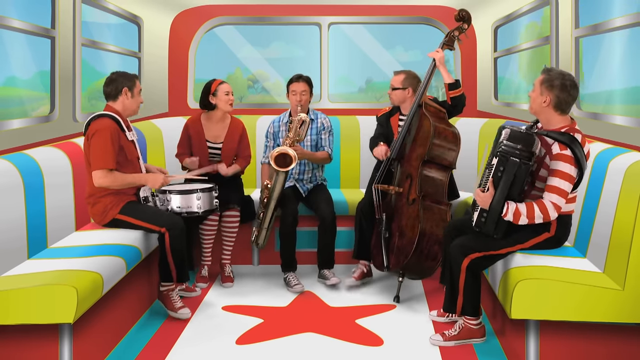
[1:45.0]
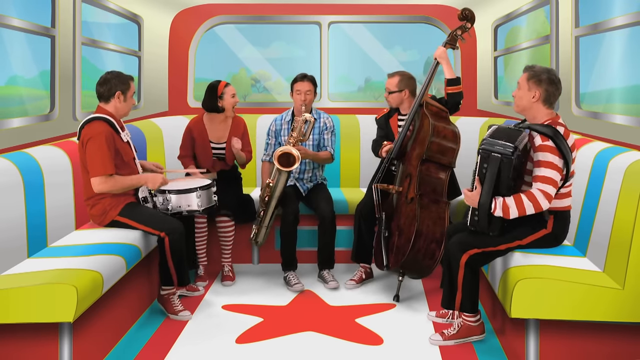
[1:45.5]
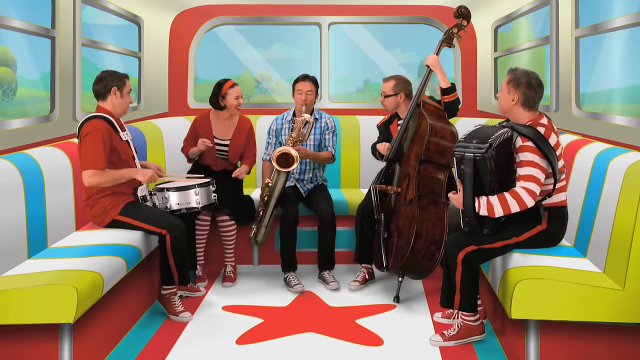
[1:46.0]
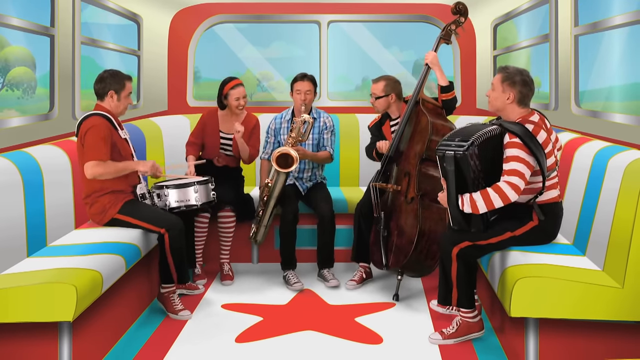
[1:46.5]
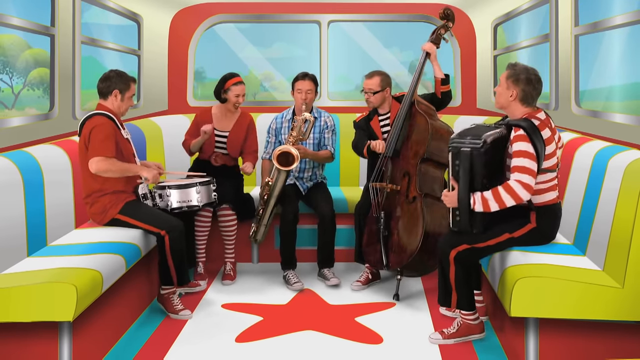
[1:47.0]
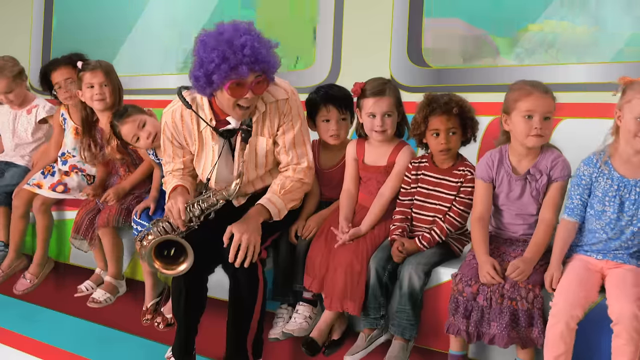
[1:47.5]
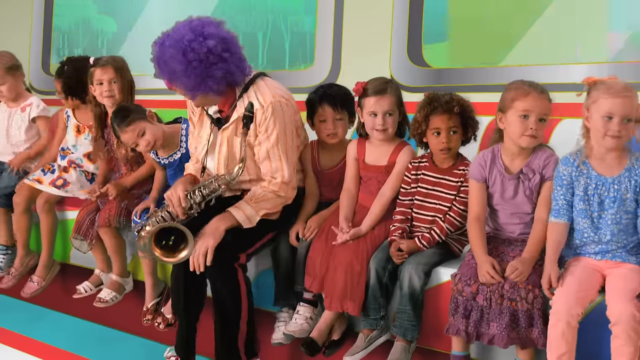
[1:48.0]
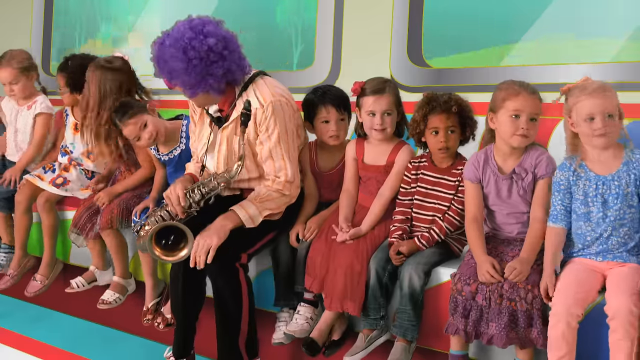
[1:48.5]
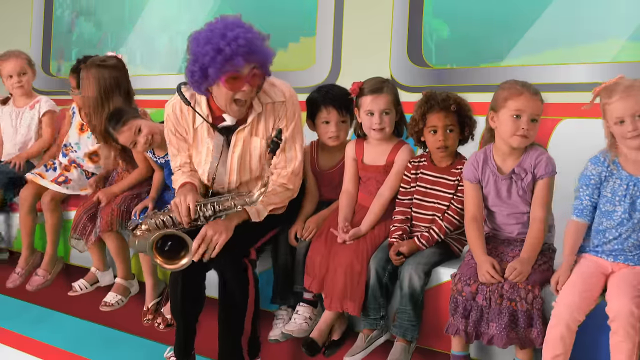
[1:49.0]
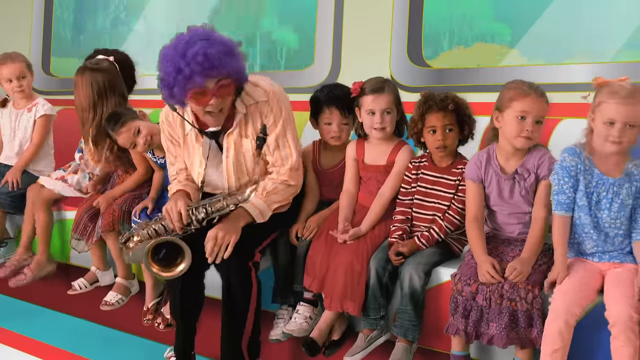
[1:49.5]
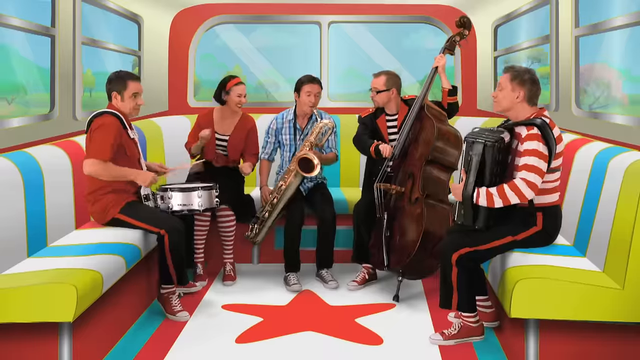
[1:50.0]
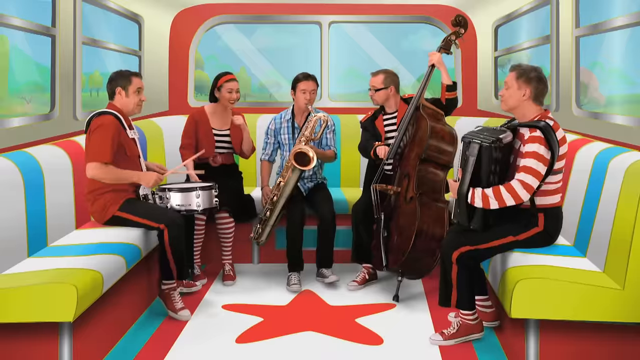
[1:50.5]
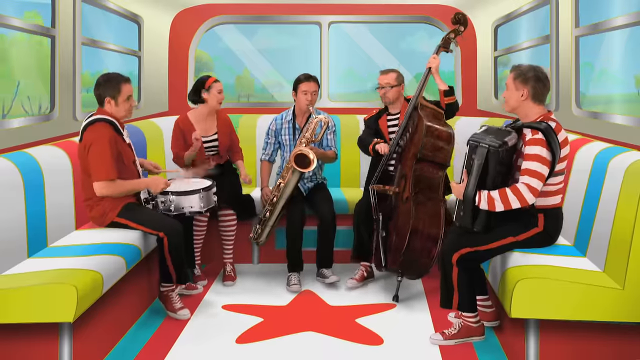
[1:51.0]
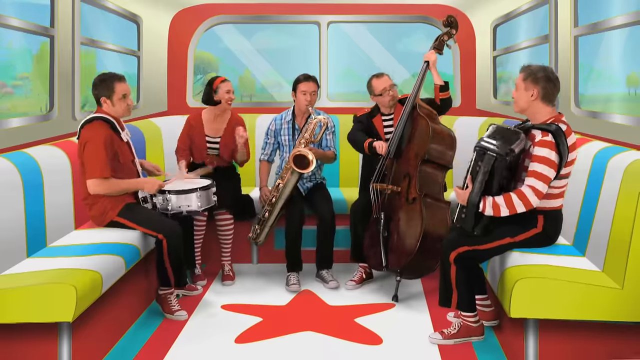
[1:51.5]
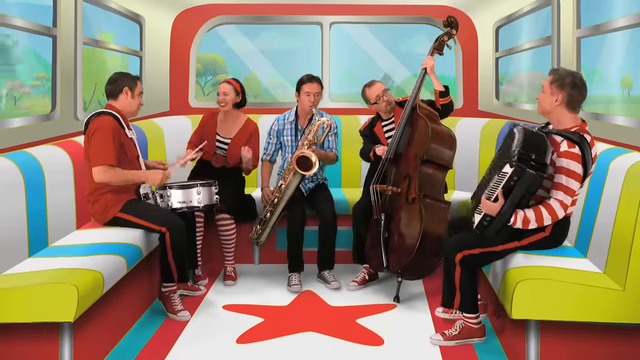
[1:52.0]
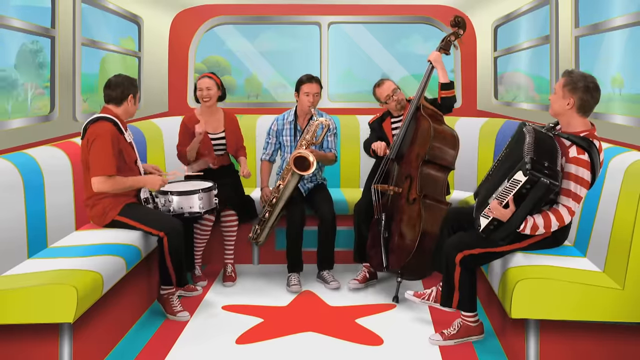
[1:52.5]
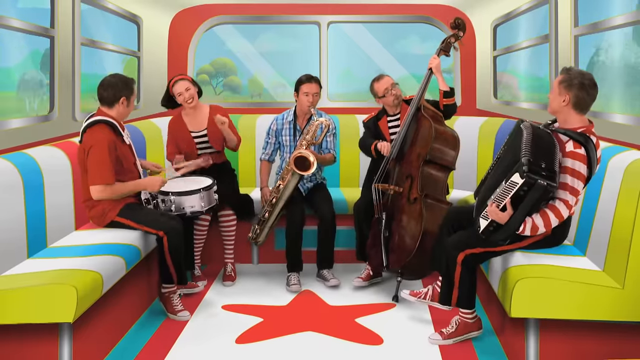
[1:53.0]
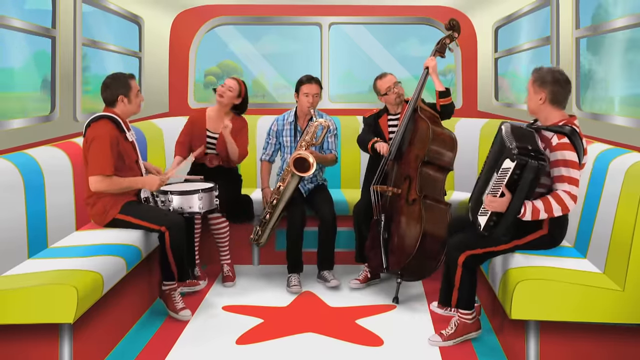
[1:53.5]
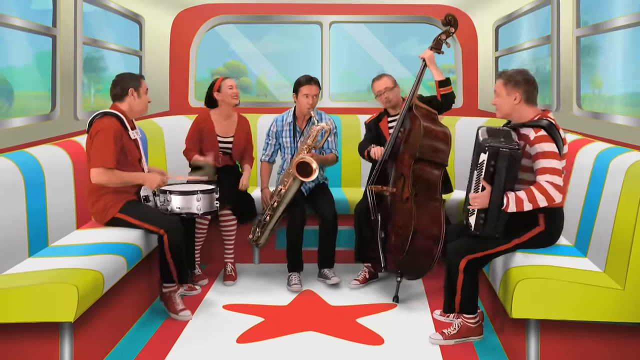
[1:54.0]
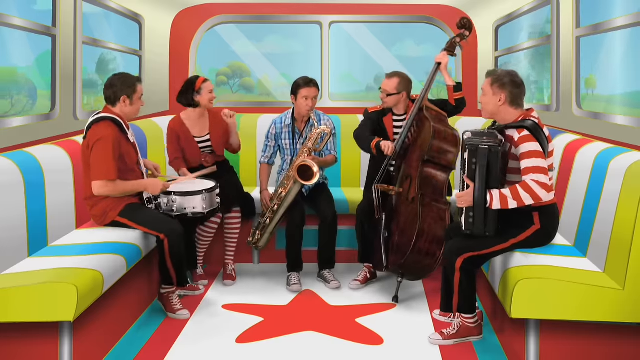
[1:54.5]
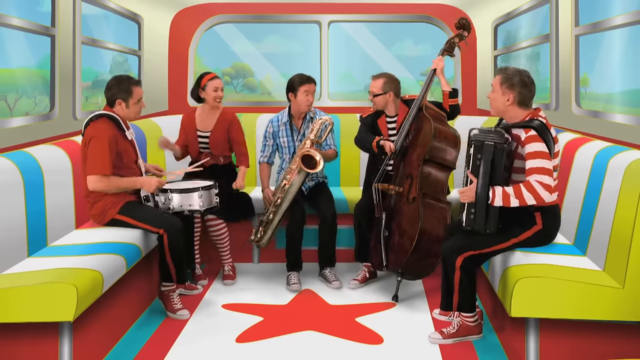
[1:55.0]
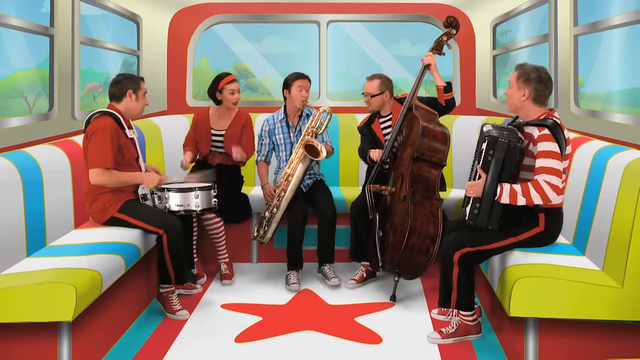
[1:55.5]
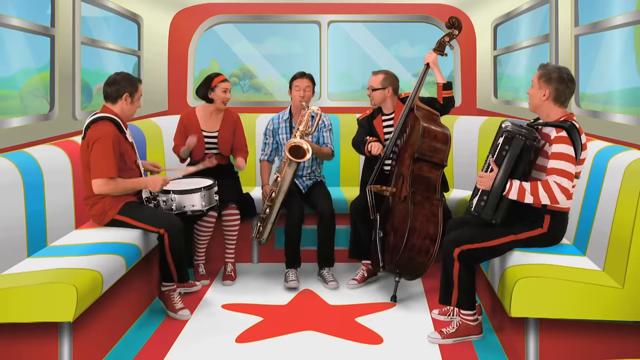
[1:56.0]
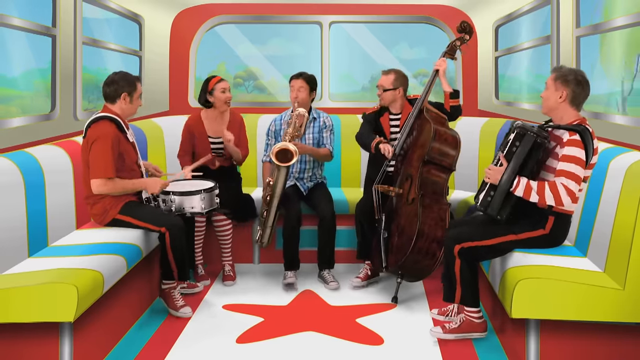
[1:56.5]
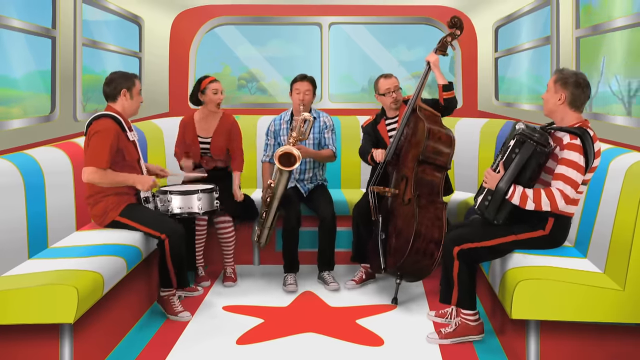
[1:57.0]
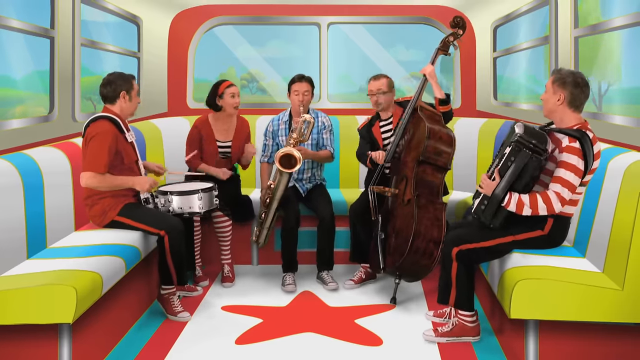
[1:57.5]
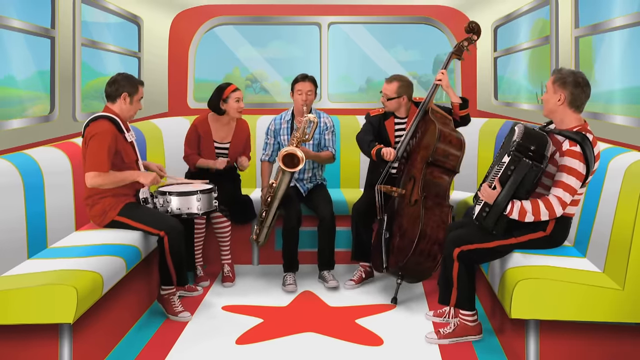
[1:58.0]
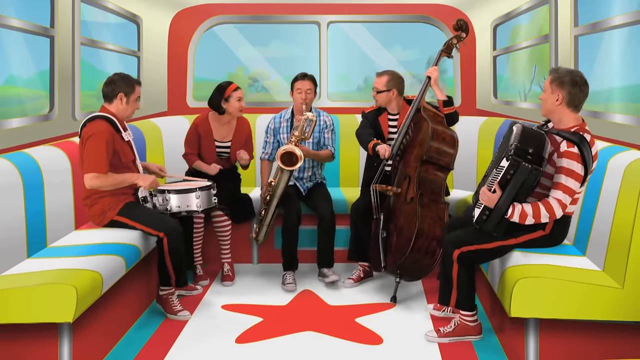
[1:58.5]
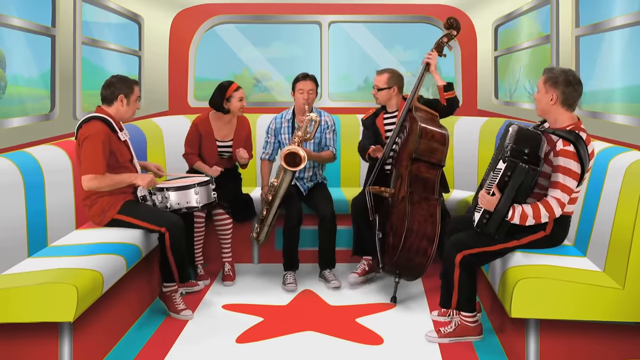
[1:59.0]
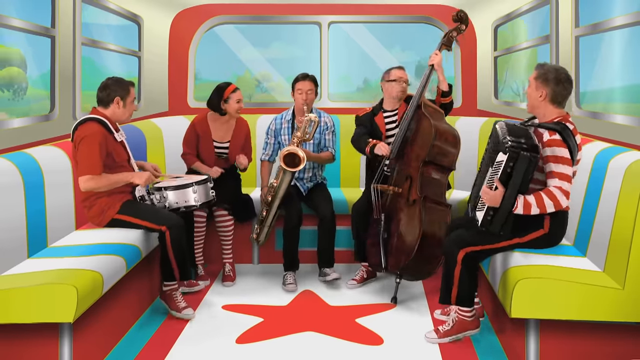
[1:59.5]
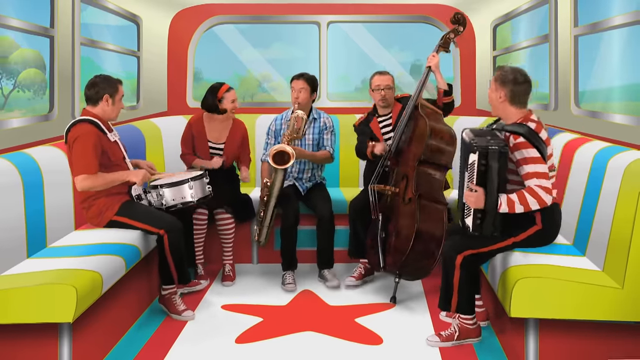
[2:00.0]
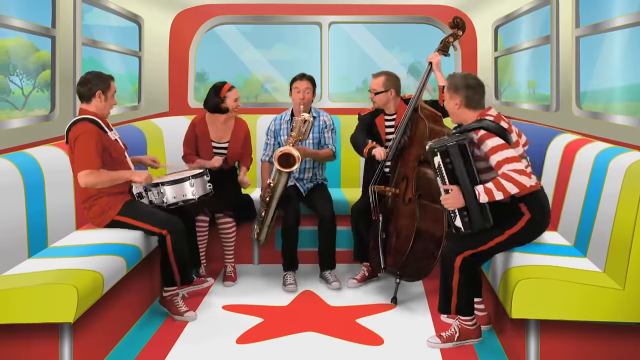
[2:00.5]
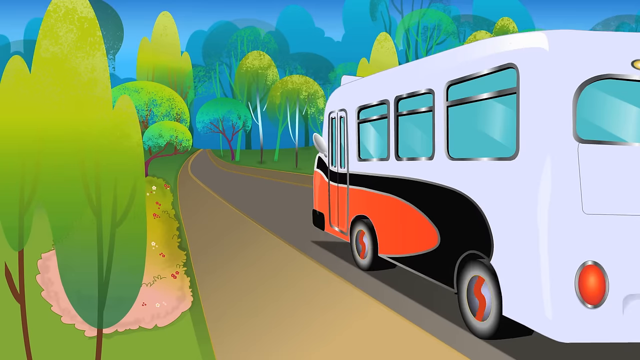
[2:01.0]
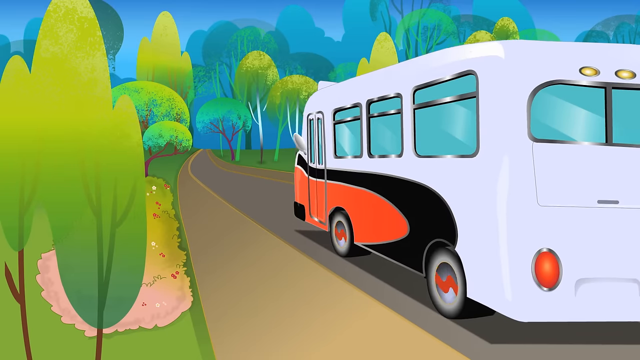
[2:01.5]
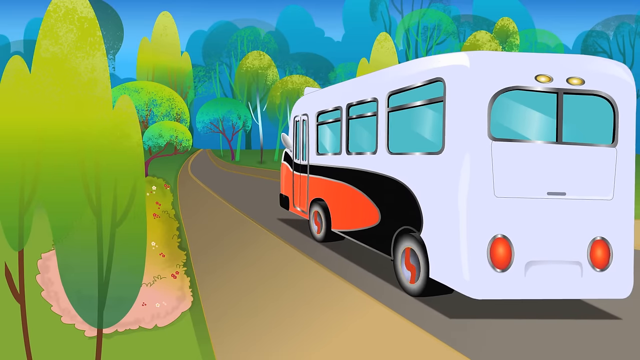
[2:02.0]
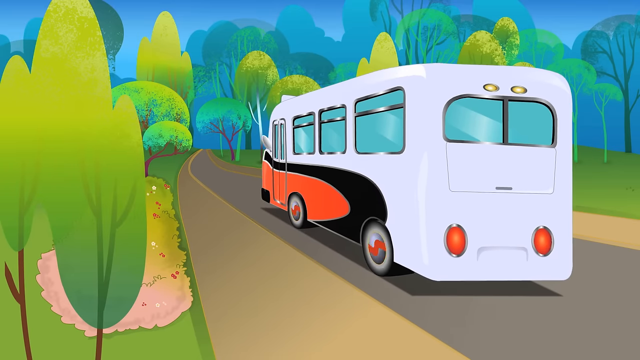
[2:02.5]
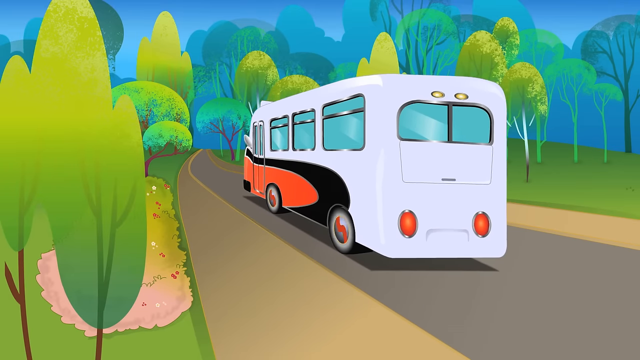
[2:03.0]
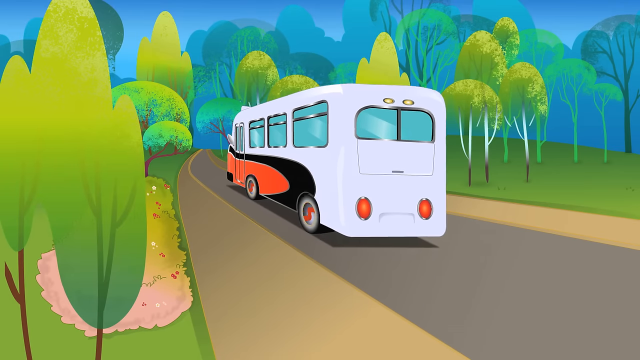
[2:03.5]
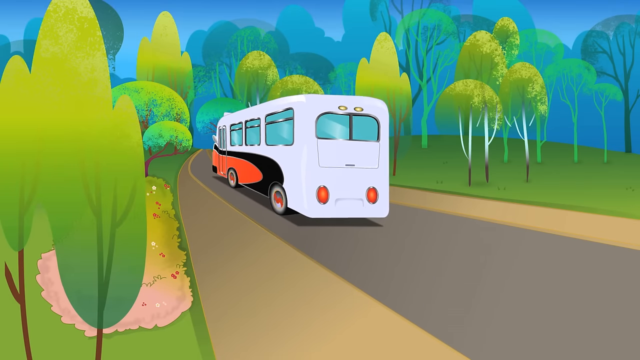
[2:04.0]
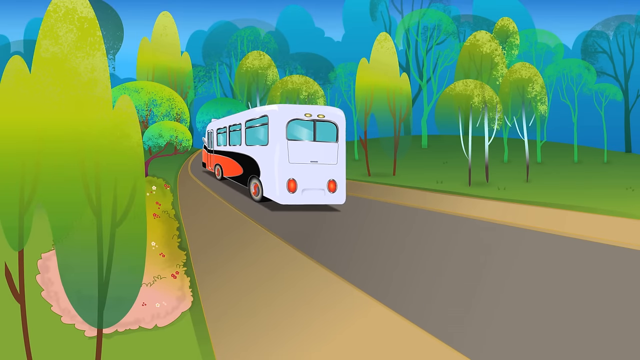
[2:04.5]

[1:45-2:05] The band plays in the back of the bus, and the view cuts to the children with the saxophone player in the purple wig sitting among them, looking toward the back. Then the bus is seen from the outside, white, black and orange, driving down the street, and the band is visible playing inside. The bus is also seen from behind, with green trees and green lawns on either side of the street and a blue sky with clouds. The bus does not roll smoothly but bumps along, maybe to the music. The band seems to be jamming. The children just watch without dancing, looking like they do not really know why this is happening. The saxophone player in the purple wig seems to enjoy it more than the children, many of whom are smiling and looking in that direction, but not with genuine smiles.